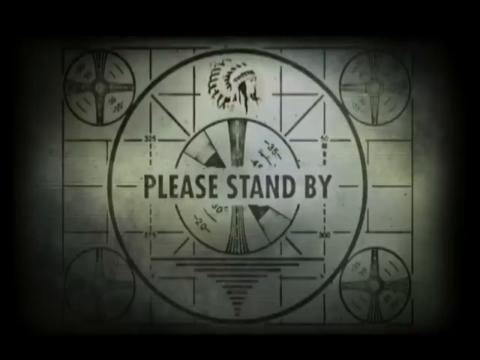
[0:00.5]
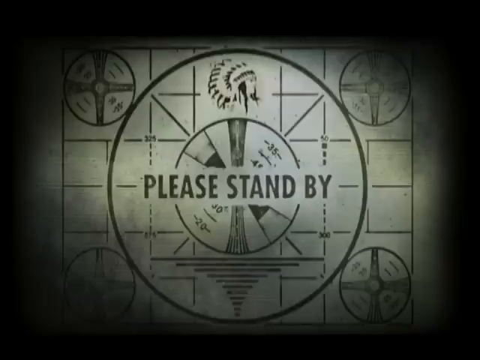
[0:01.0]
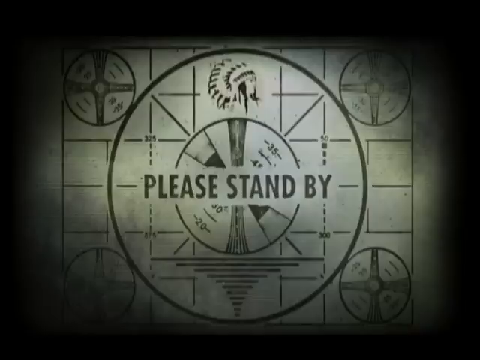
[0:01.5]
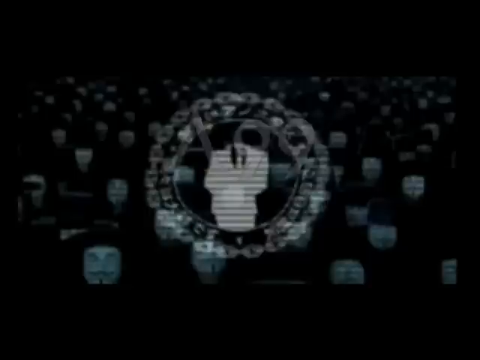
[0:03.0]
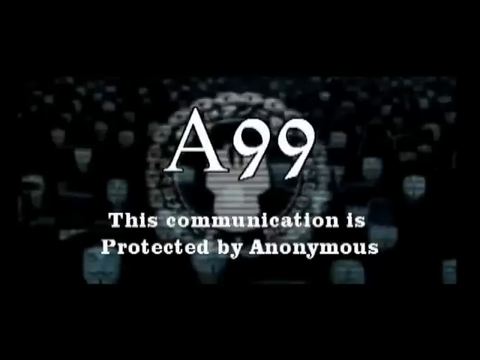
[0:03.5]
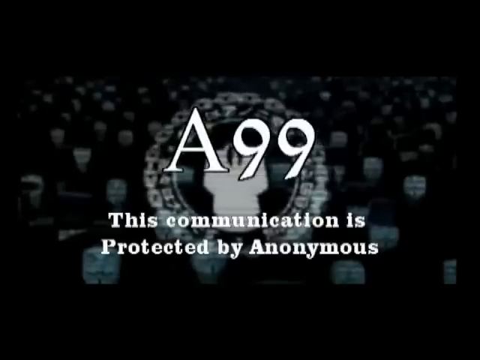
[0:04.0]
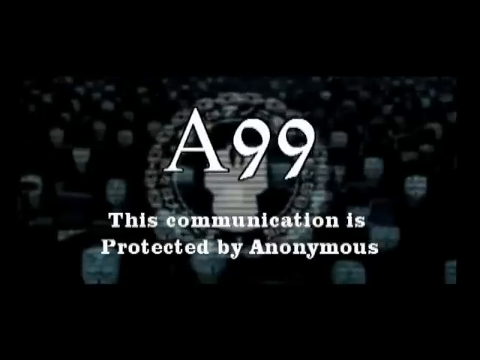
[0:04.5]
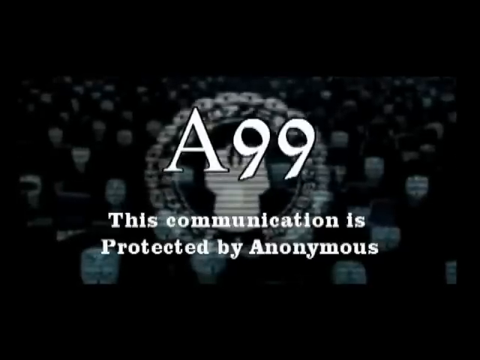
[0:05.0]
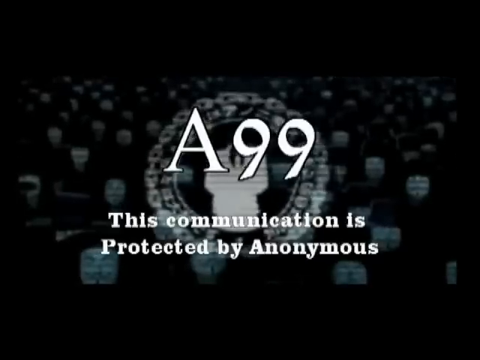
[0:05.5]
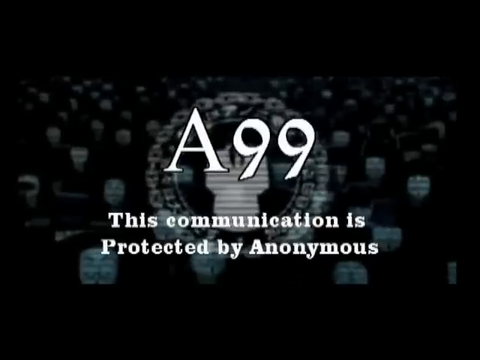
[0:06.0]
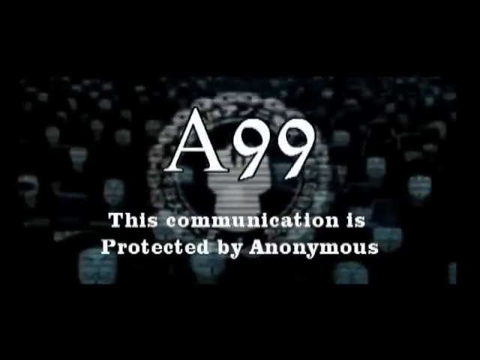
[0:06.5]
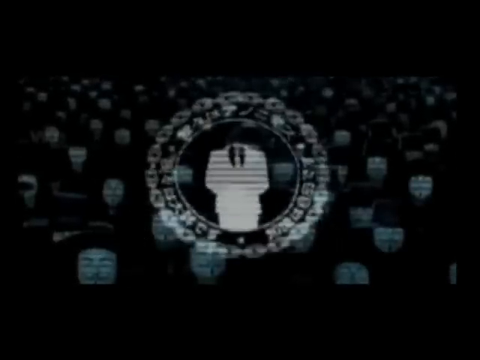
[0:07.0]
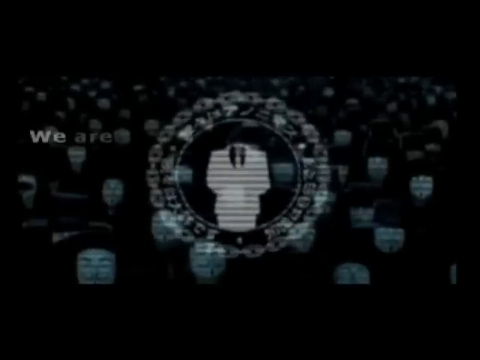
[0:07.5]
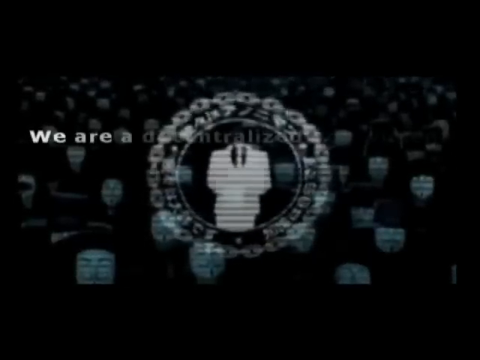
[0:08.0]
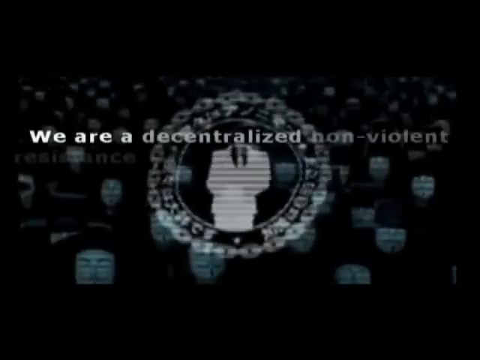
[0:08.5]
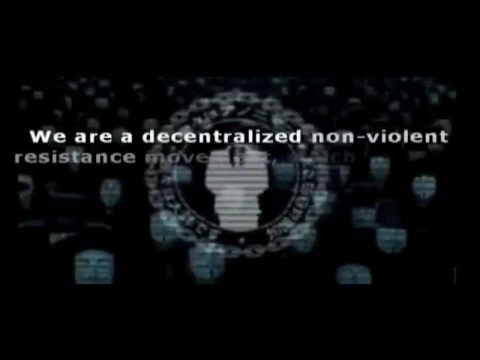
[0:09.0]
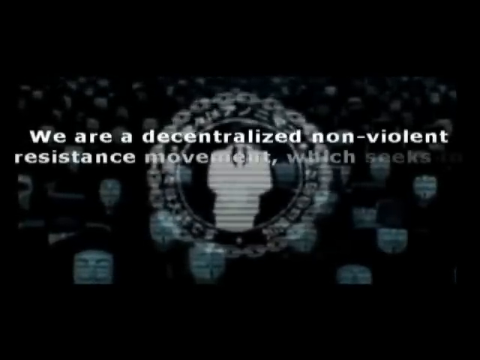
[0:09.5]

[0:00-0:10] The video opens with a kind of intro: one big circle in the middle and four smaller circles, one in each of the corners. A drawing of a Native American man is in the upper part of the big circle, and in its middle a caption says "please stand by". After a while, a black background with many people wearing white masks appears, along with white text that reads "A99 - This communication is protected by anonymous". A circular Anonymous logo flashes in the background, and text slowly appears that reads "we are a decentralized, non-violent, resistance movement..."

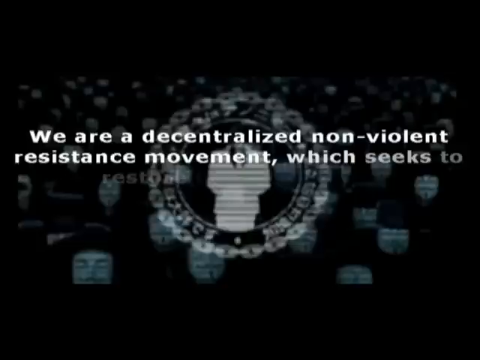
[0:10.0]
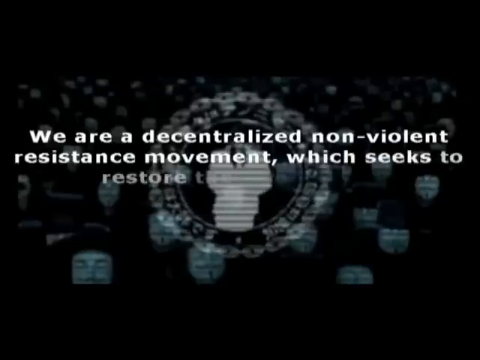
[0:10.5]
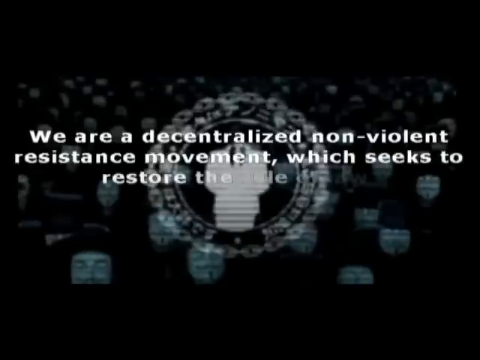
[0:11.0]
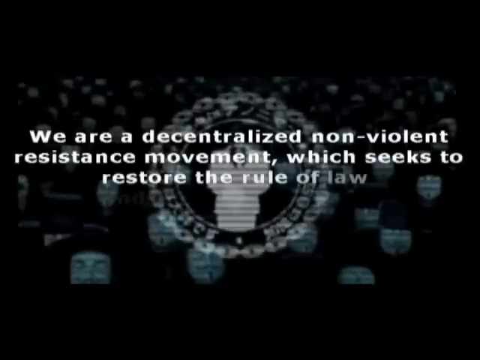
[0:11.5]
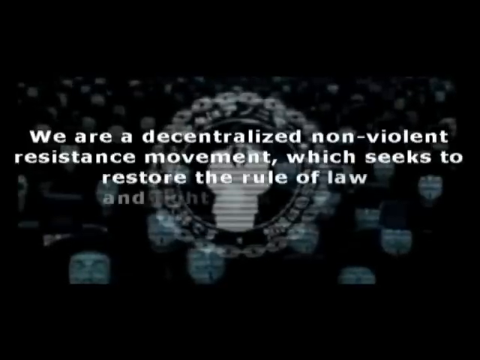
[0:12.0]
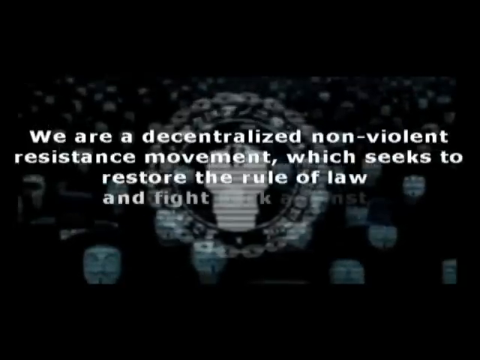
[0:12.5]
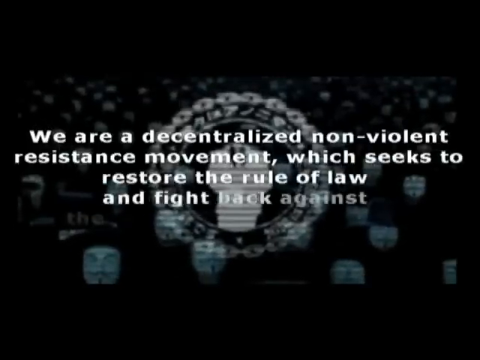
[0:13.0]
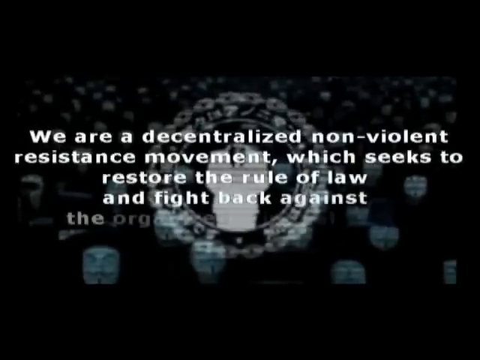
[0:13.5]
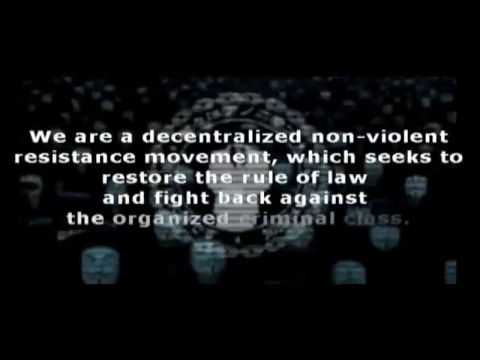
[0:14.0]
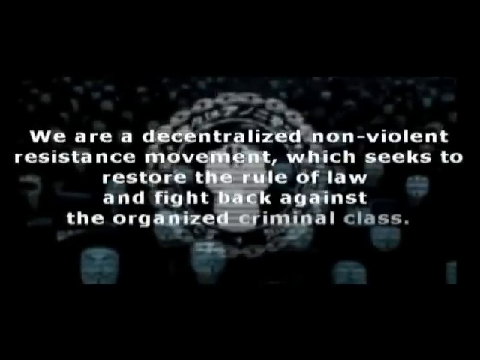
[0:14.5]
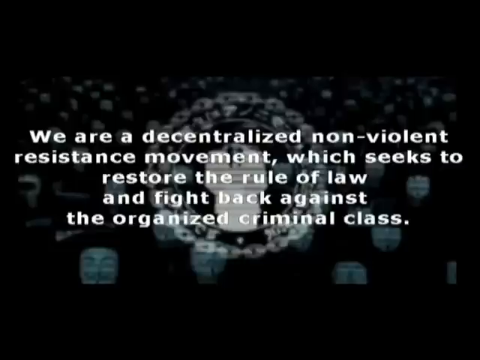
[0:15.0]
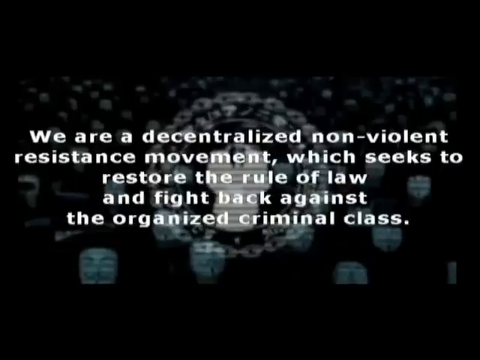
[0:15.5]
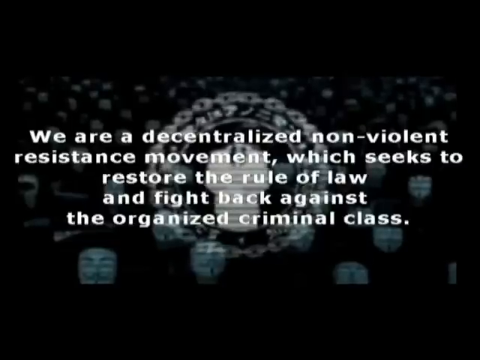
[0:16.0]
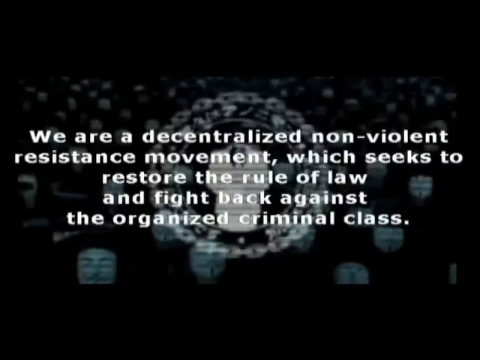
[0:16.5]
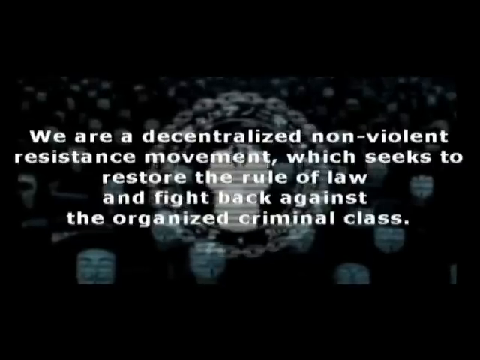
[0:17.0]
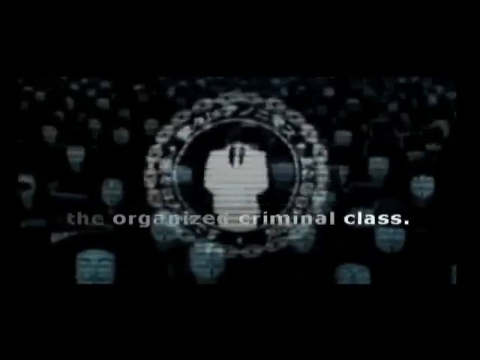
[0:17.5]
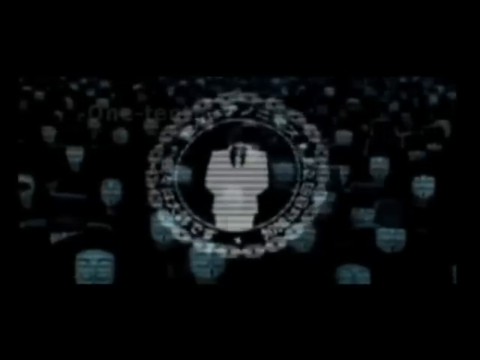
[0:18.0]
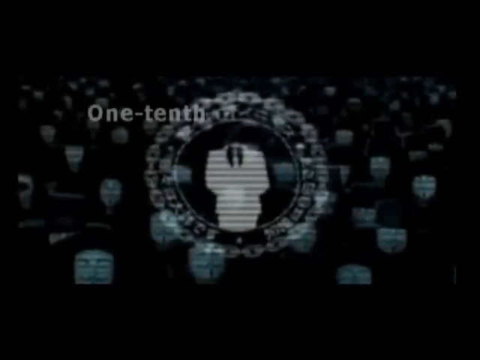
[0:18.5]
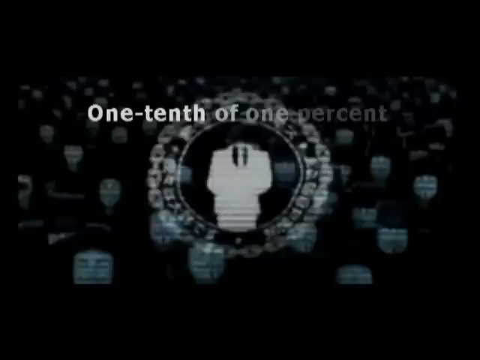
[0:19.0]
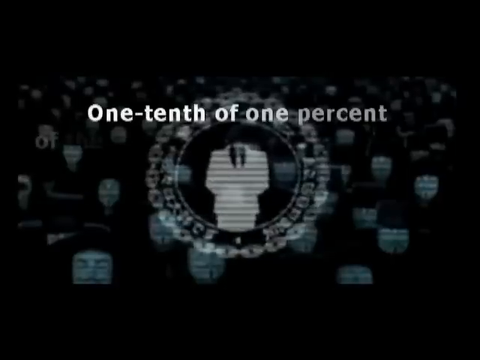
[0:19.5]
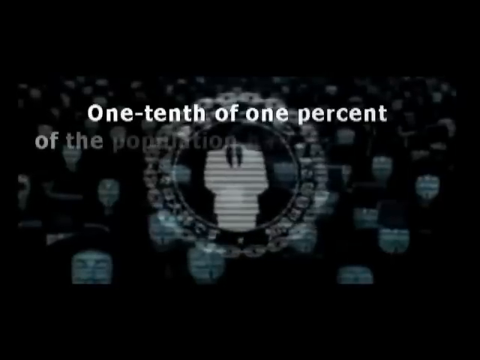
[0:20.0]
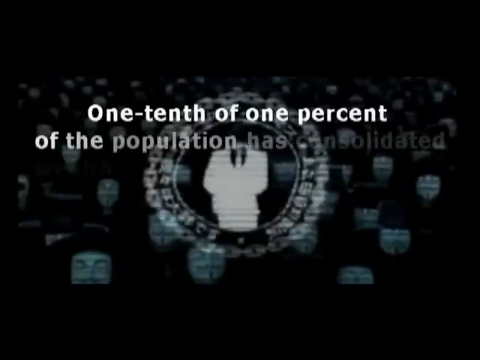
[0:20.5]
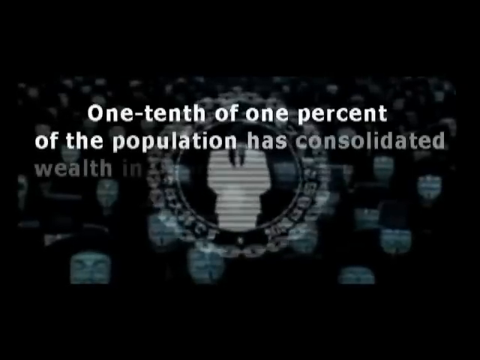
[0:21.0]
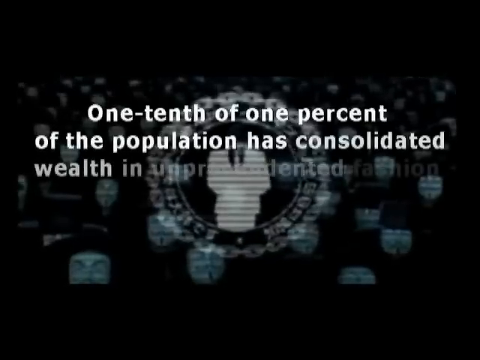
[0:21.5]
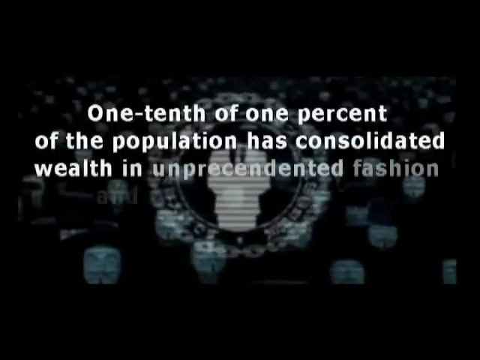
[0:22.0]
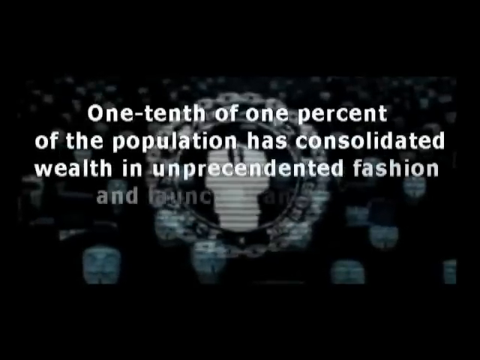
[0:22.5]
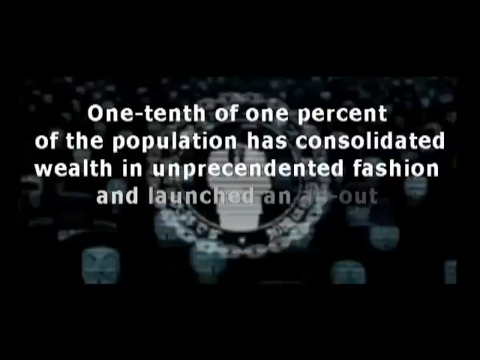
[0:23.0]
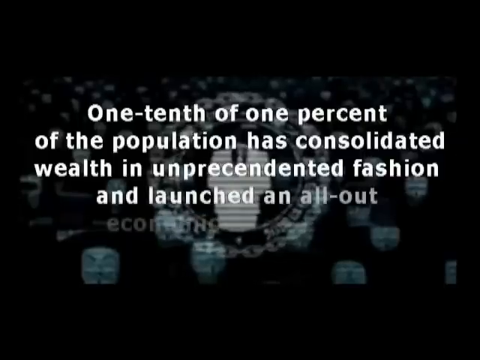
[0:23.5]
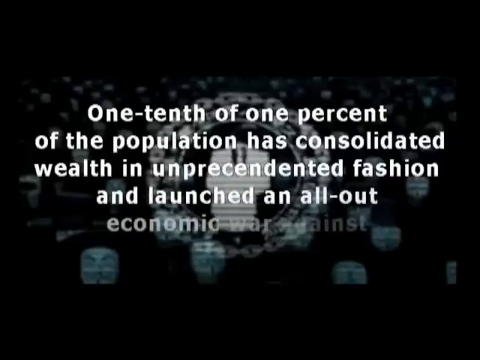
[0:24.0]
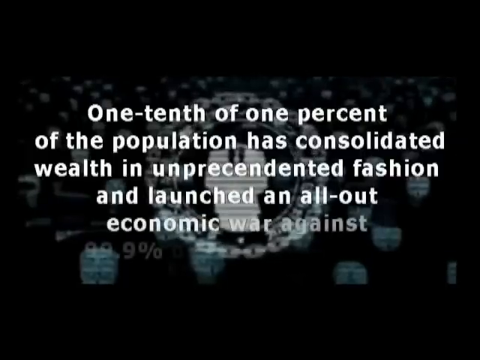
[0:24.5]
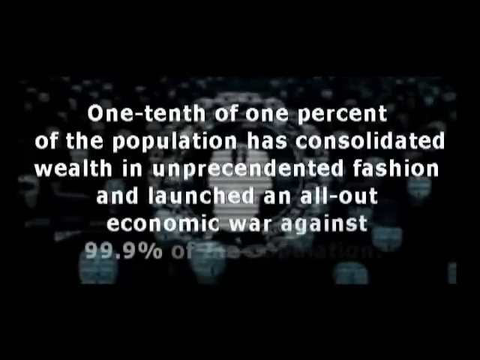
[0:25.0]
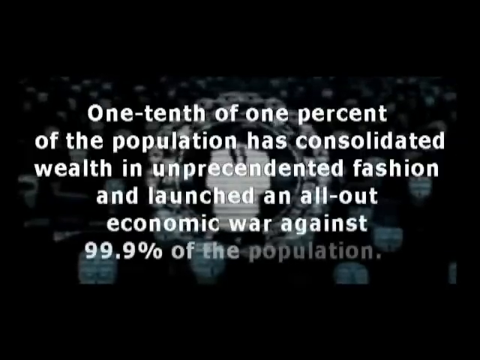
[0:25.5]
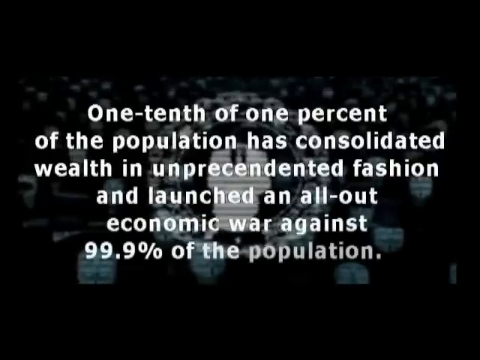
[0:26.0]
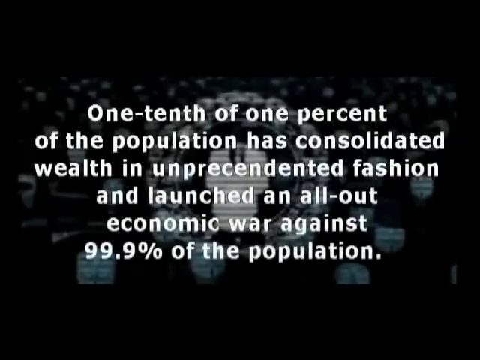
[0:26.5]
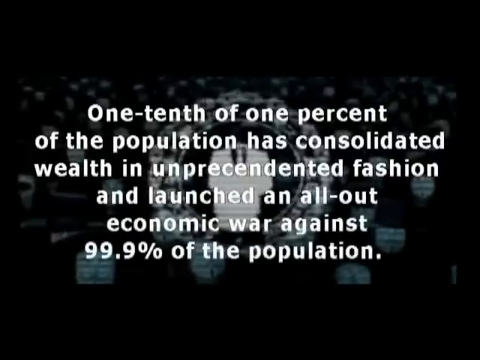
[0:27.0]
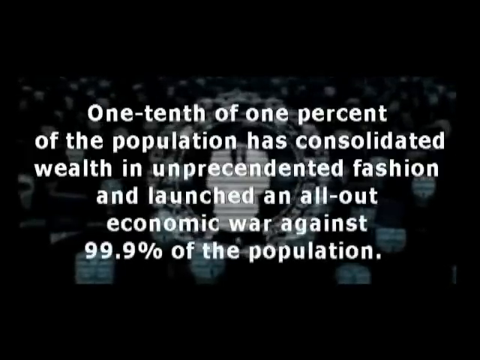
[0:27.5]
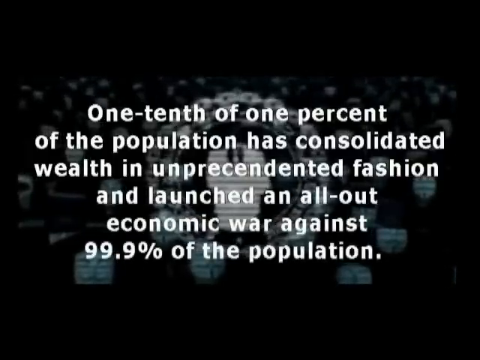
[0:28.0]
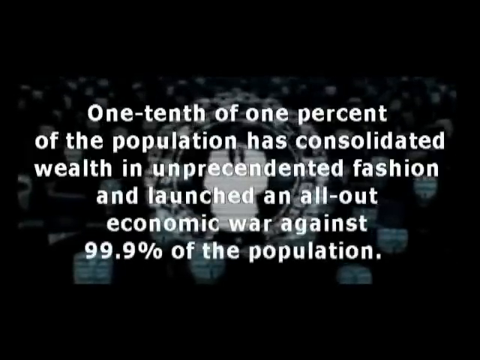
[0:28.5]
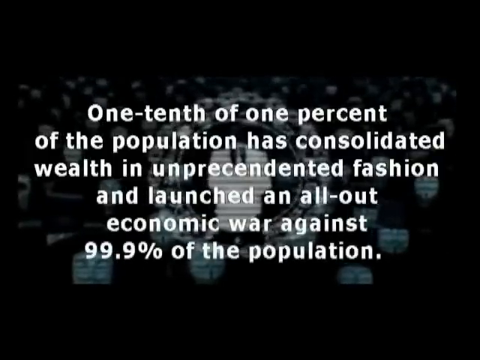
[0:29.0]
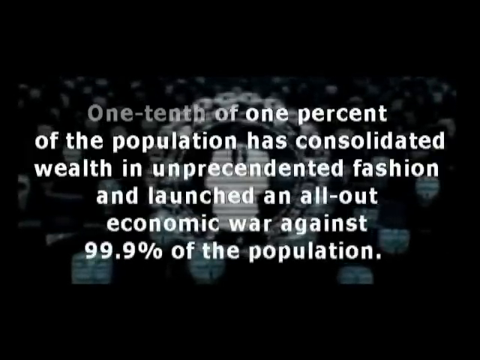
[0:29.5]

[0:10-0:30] On a black background with many people wearing white masks, white text slowly appears in front. It reads: "We are a decentralized, non-violent resistance movement which seeks to restore the rule of law and fight back against the organized criminal class". It then disappears and another block of text appears: "One-tenth of one percent of the population has consolidated wealth in unprecedented fashion and launched an all-out economic war against 99.9% of the population". As the text appears, a circular Anonymous logo flashes in the background, with something inside it that looks like a person wearing a white suit. The text appears slowly, word after word, and once fully shown it remains on screen for a few seconds so it can be easily read. Because of the flashing logo and the slight zooming in, the video seems to be glitching a bit.